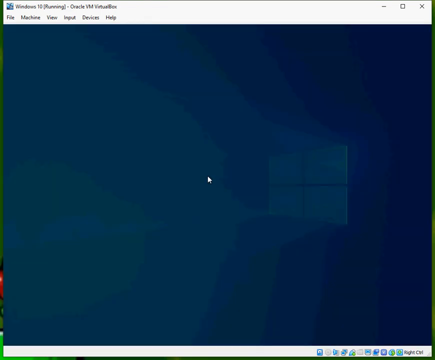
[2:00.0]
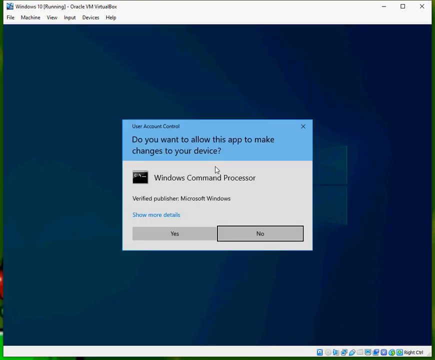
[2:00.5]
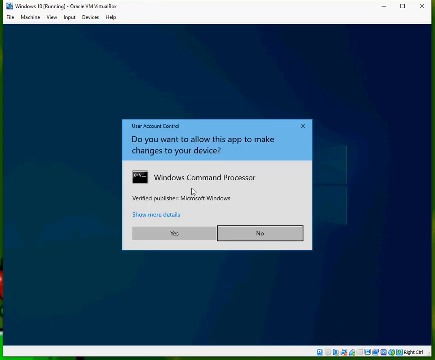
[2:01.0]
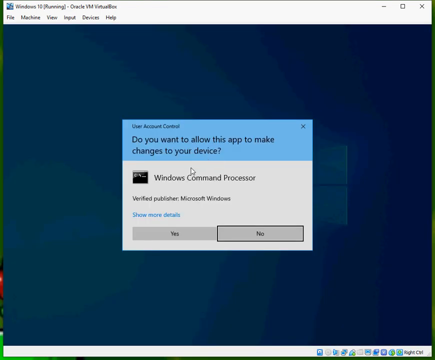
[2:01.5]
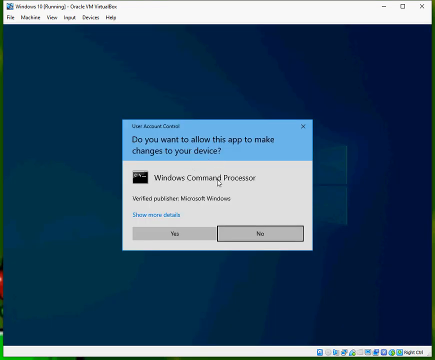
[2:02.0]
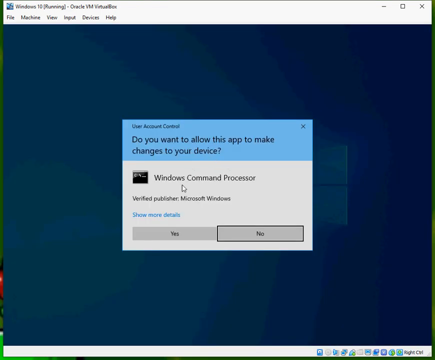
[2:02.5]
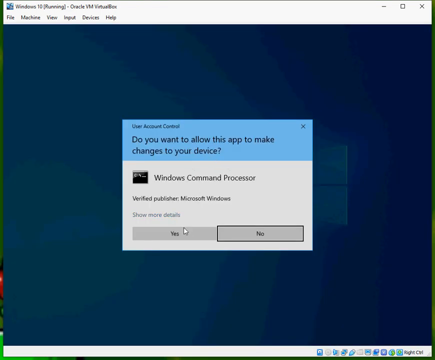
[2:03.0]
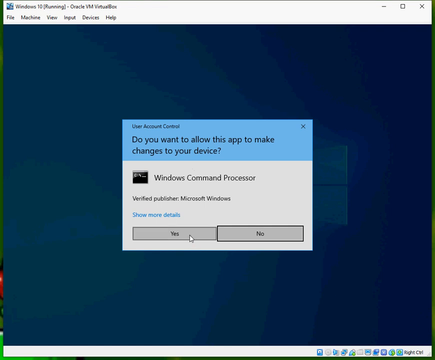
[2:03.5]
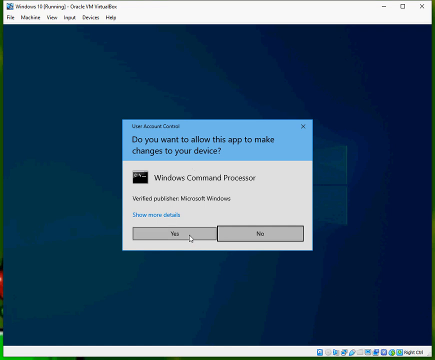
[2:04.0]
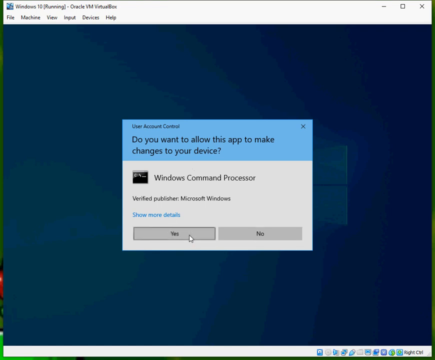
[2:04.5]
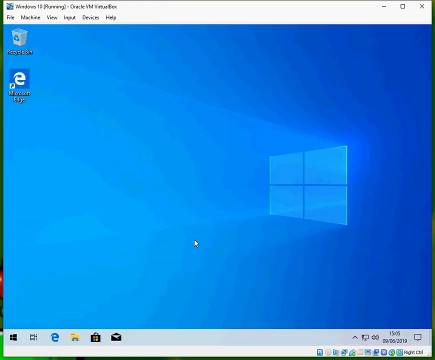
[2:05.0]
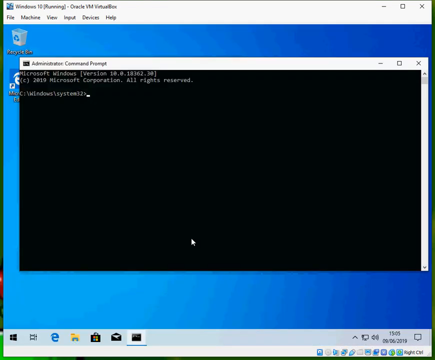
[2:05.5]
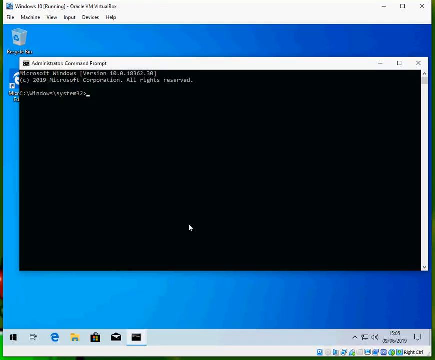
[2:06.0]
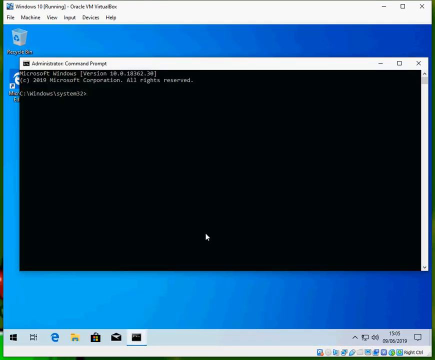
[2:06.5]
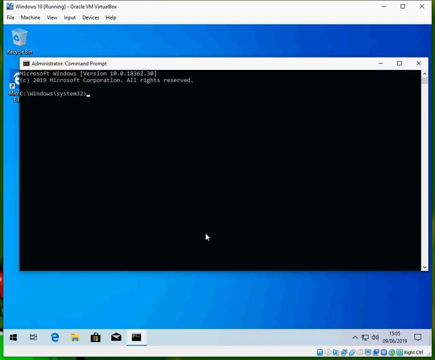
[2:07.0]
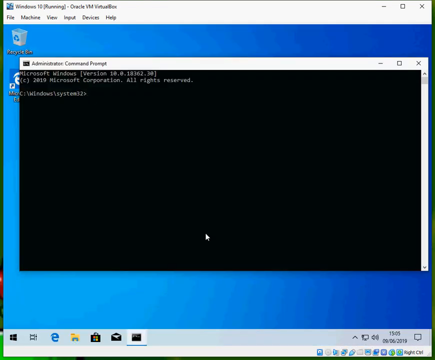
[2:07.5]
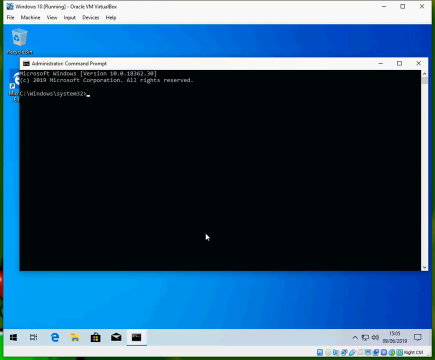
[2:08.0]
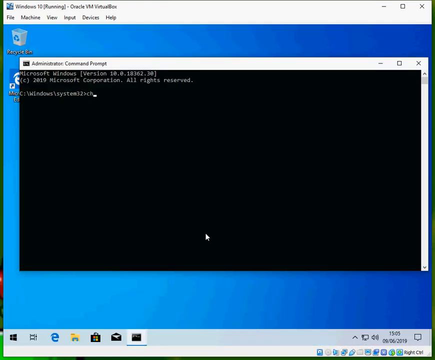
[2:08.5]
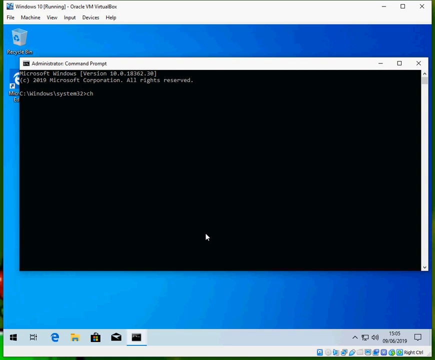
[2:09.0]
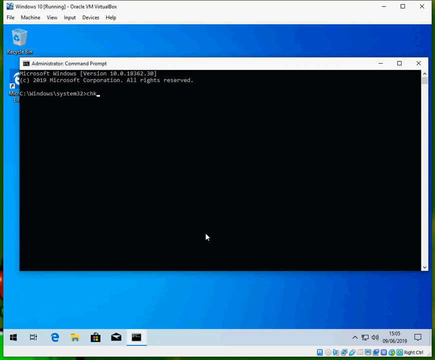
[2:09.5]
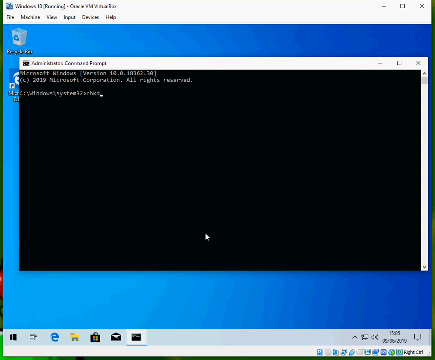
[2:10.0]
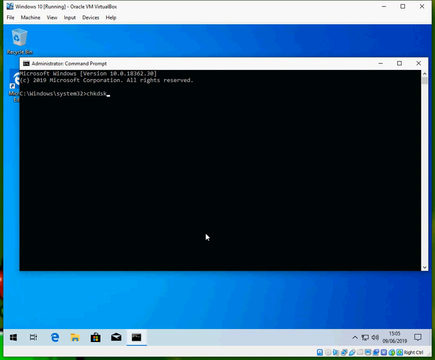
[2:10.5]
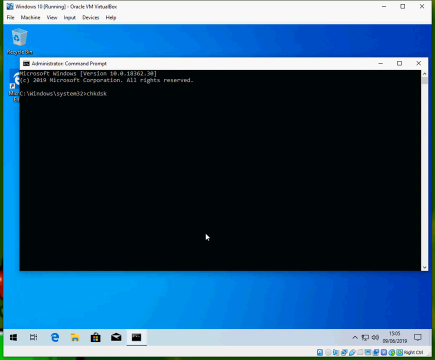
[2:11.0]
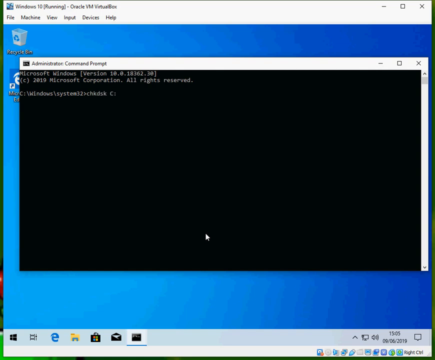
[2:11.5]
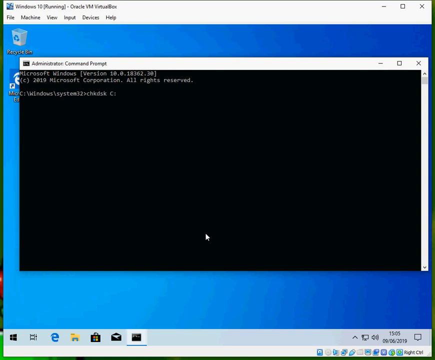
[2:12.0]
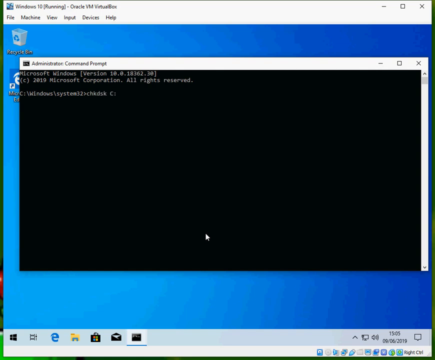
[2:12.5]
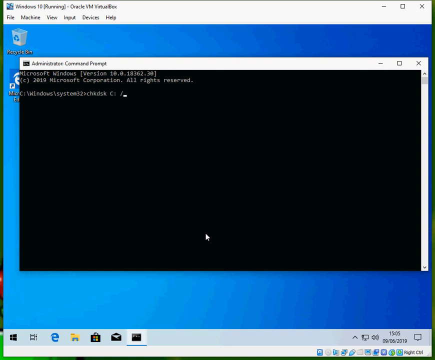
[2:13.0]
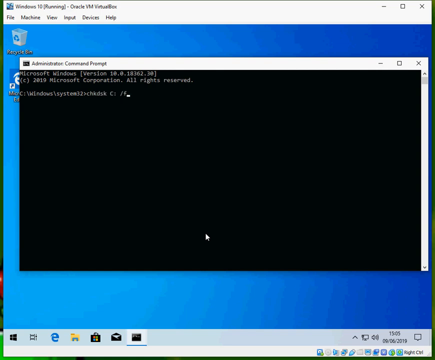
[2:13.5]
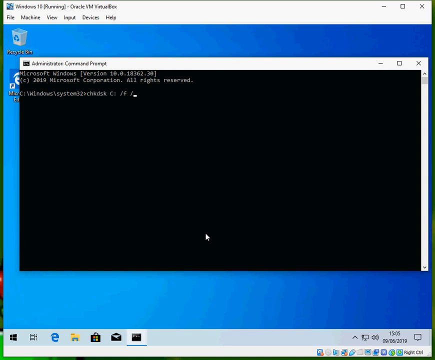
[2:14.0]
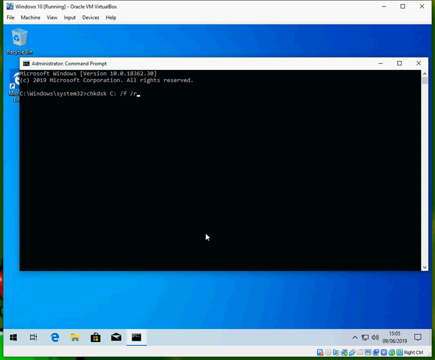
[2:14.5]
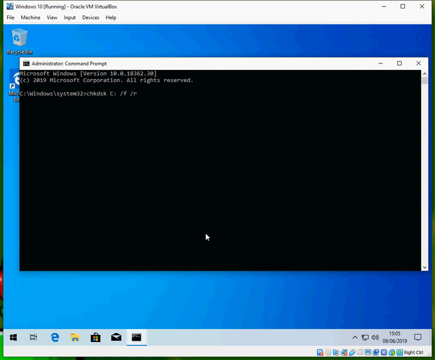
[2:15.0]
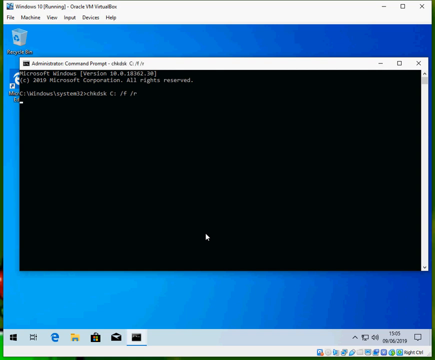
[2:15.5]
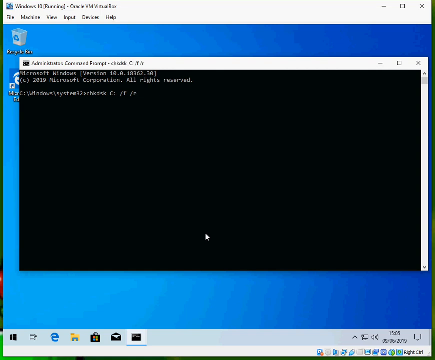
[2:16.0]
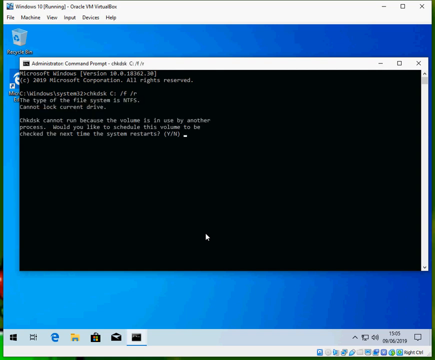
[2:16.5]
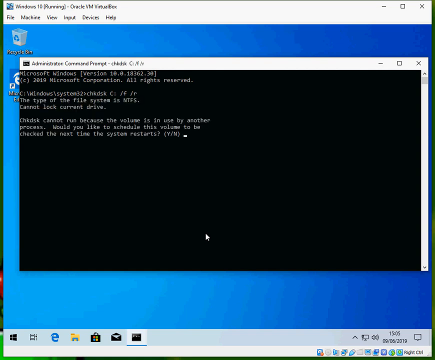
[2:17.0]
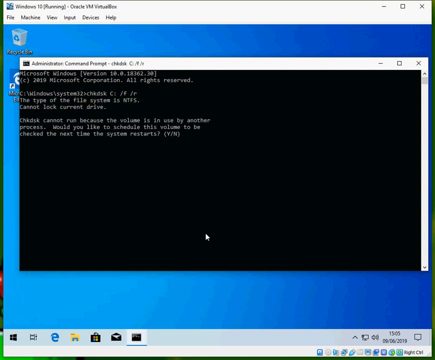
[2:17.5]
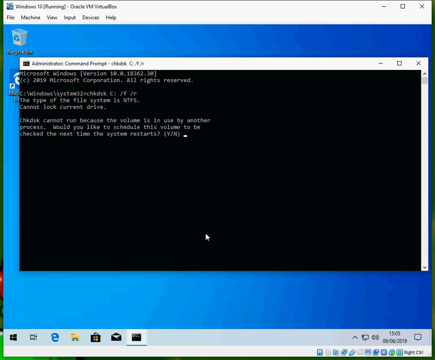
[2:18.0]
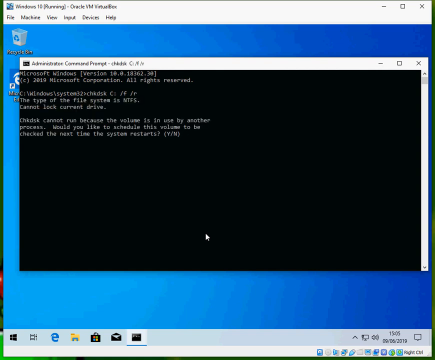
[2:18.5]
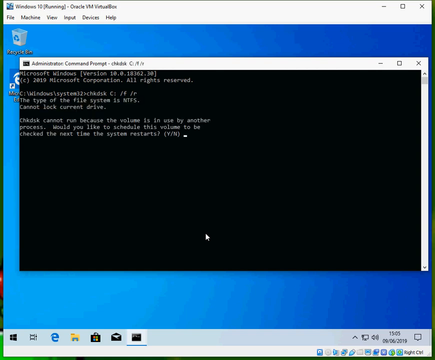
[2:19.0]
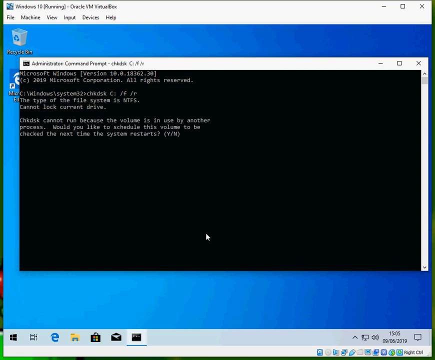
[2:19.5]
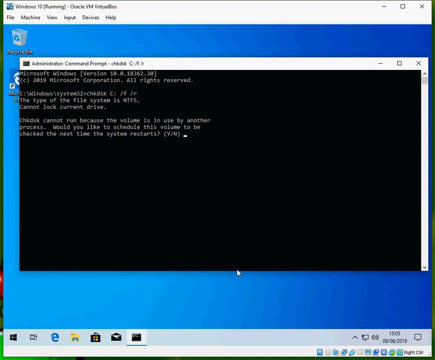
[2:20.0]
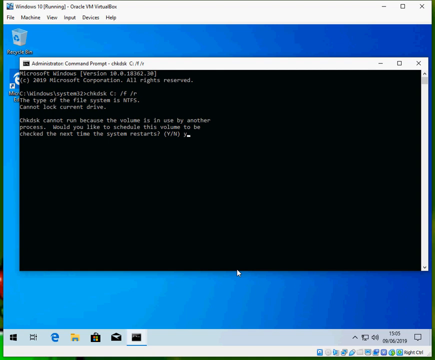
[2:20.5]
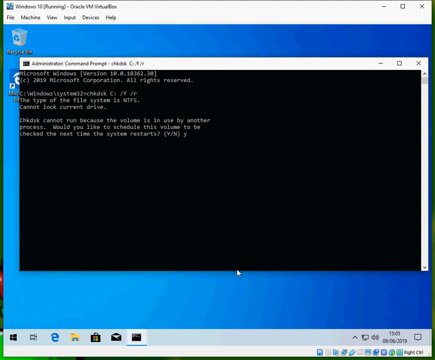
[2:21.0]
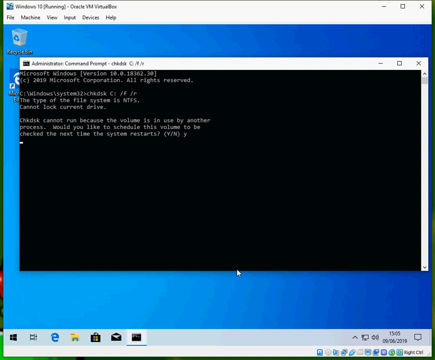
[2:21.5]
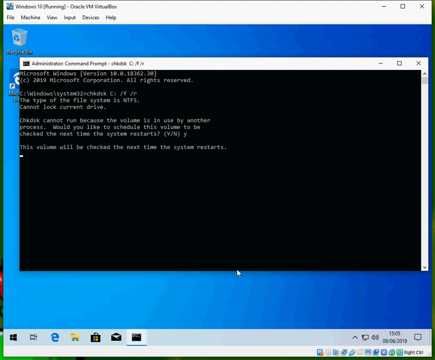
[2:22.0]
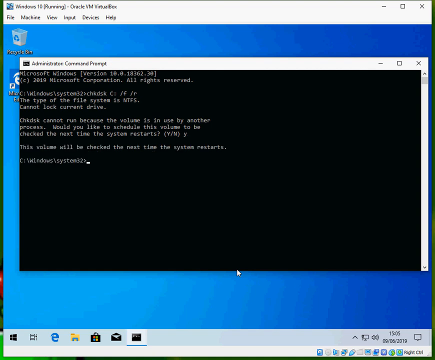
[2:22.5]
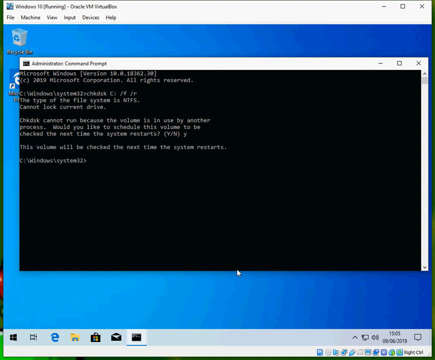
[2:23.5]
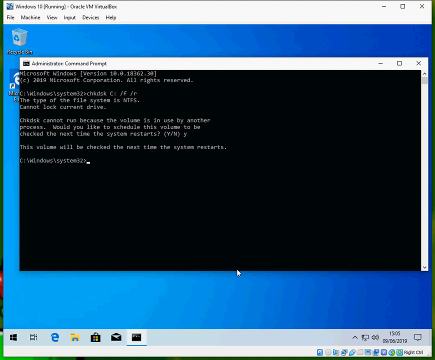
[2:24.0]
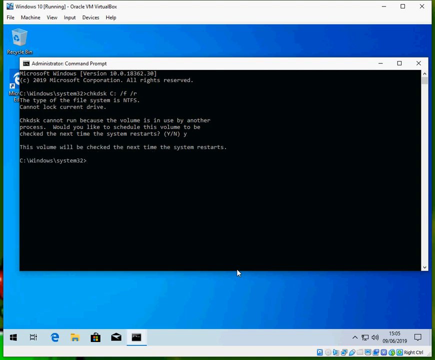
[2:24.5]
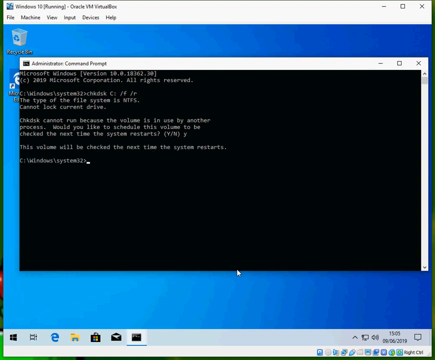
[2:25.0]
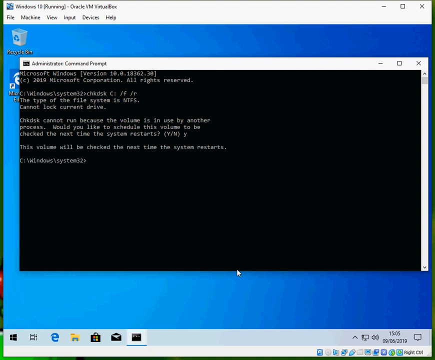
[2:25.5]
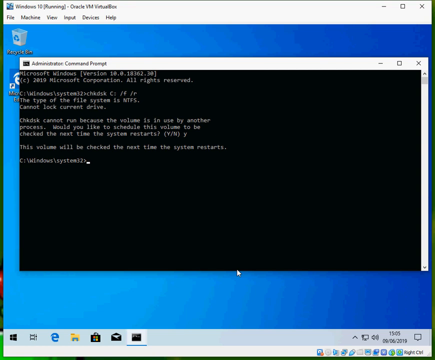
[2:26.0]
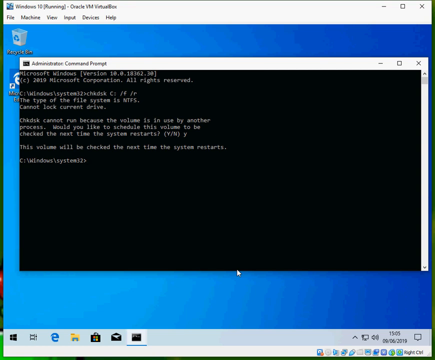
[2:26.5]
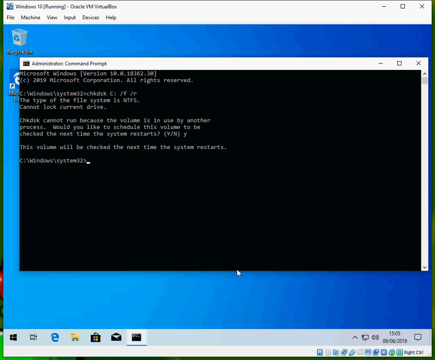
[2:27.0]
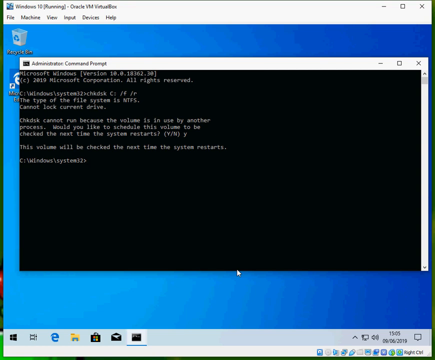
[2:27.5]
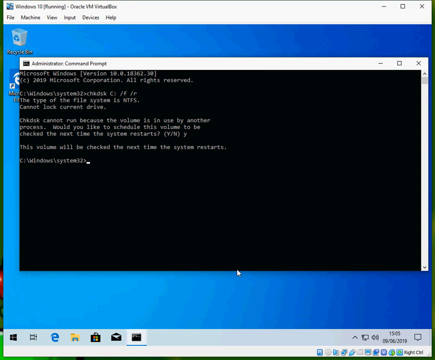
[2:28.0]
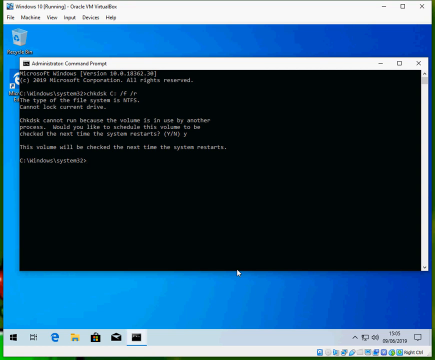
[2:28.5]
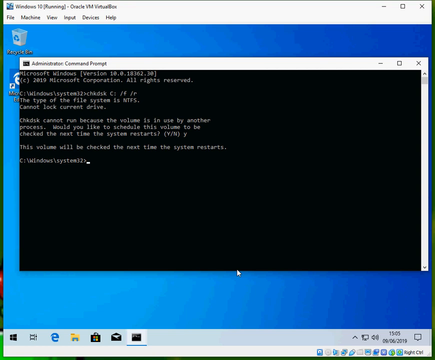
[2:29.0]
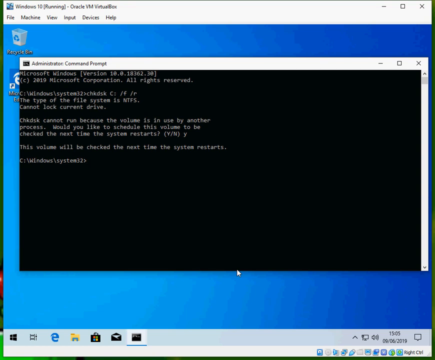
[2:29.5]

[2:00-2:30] The scene begins on a dark Windows logo page on a Windows PC with two cursors in the middle. Tabs at the top read File, Machine, View, Input, Devices and Help. A user account control box pops up asking "do you want to allow this app to make changes to your device?" with a yes box and a no box; the no box is highlighted. The person clicks yes, which brings up the administrator command prompt box, black with white text and a blinking cursor. Code begins to appear as the blinking cursor moves from left to right across the screen, followed by blocks of white text. This continues until the screen returns to the dark Windows logo page, where the Windows logo is faintly visible along with one white cursor in the middle.